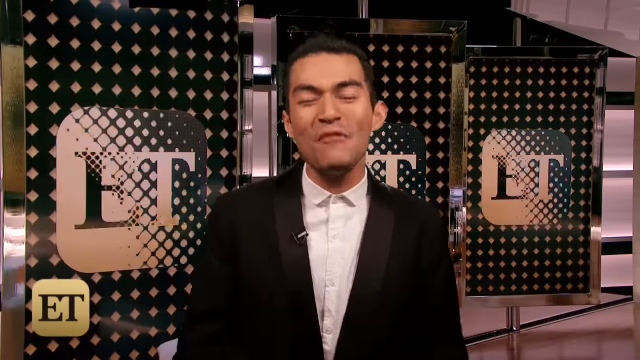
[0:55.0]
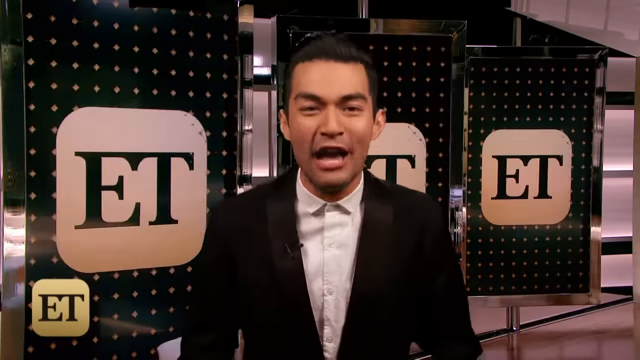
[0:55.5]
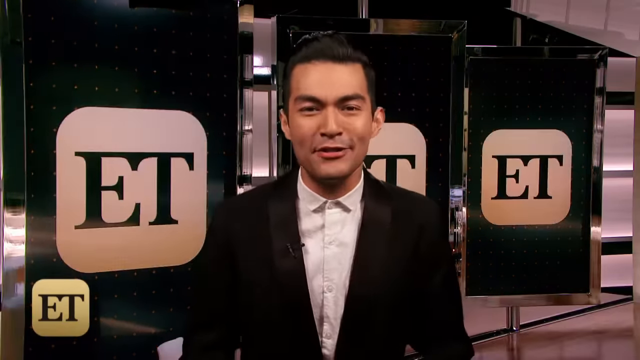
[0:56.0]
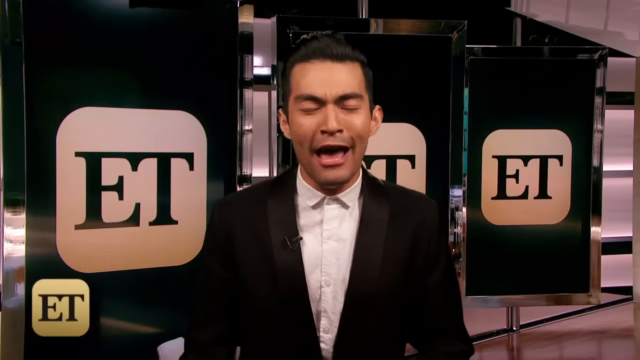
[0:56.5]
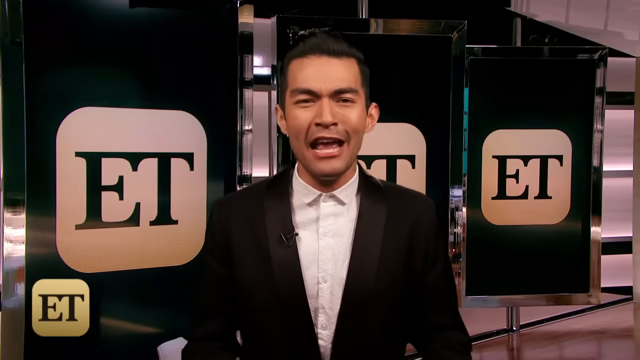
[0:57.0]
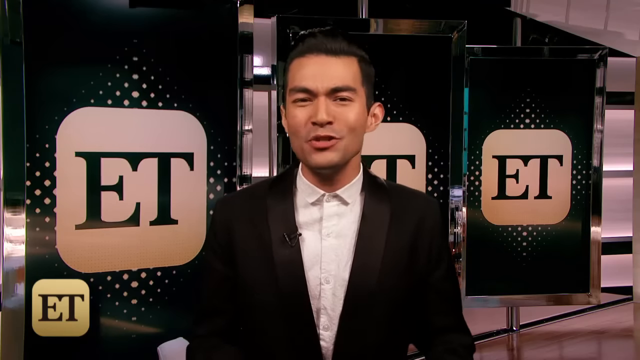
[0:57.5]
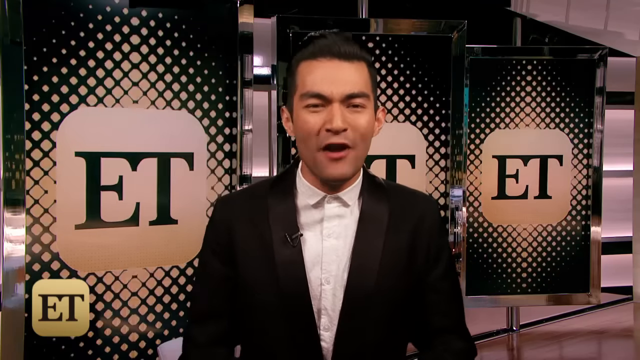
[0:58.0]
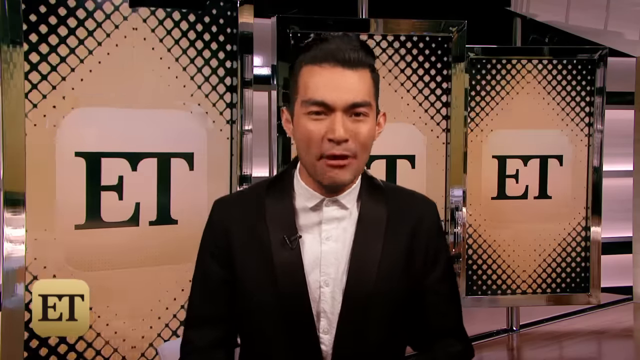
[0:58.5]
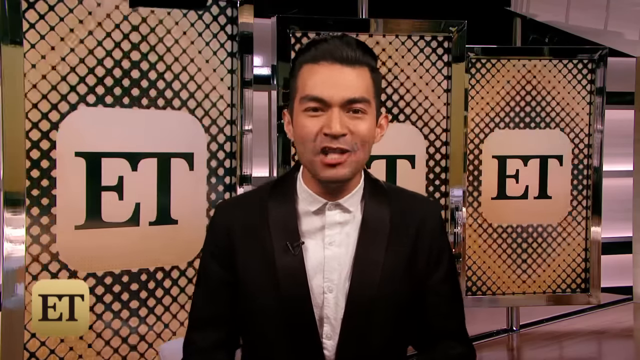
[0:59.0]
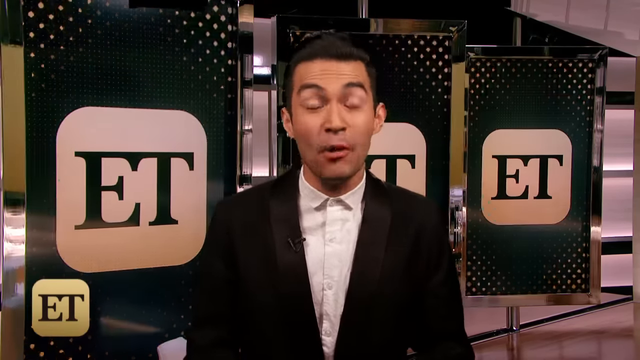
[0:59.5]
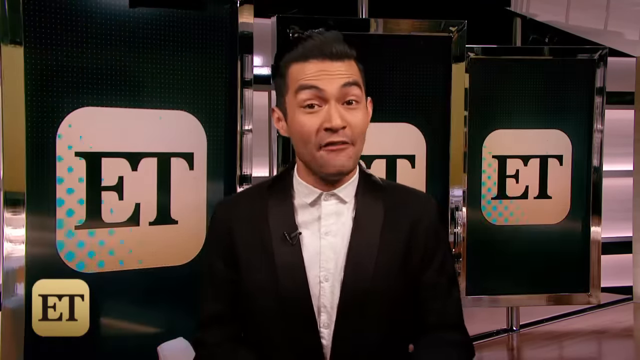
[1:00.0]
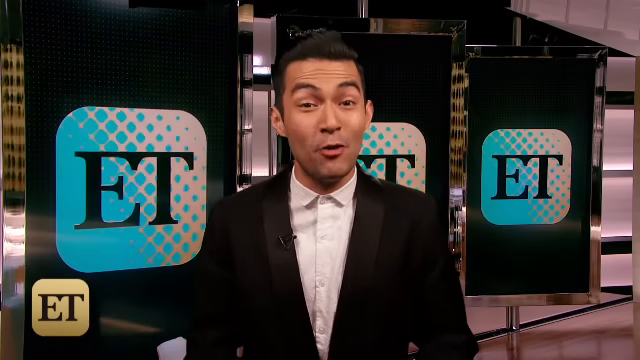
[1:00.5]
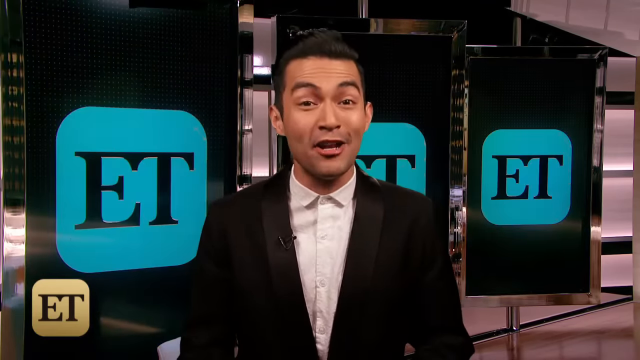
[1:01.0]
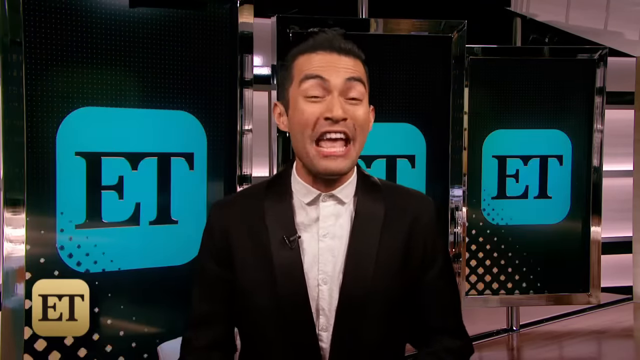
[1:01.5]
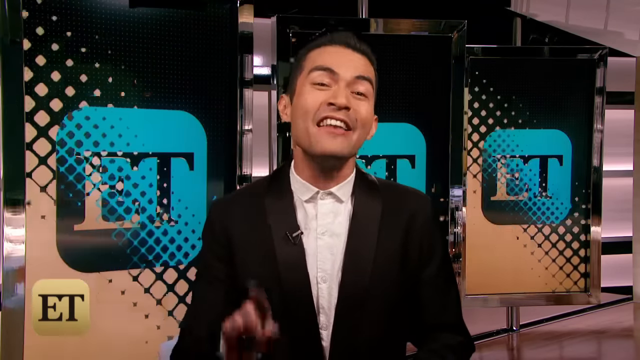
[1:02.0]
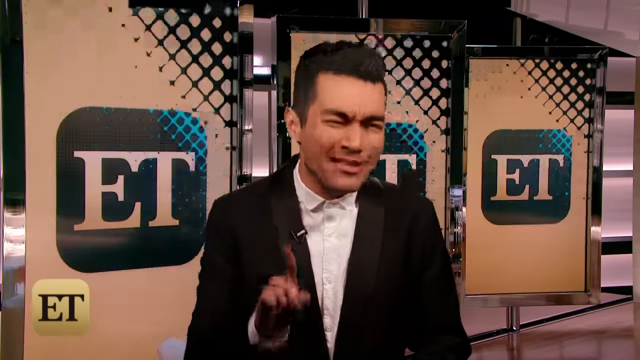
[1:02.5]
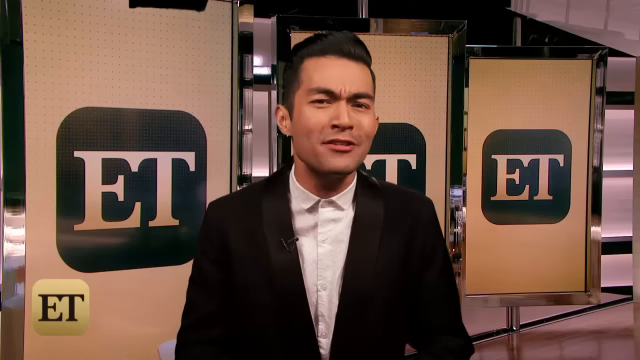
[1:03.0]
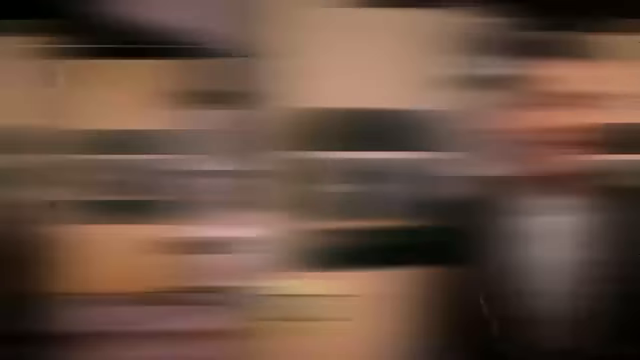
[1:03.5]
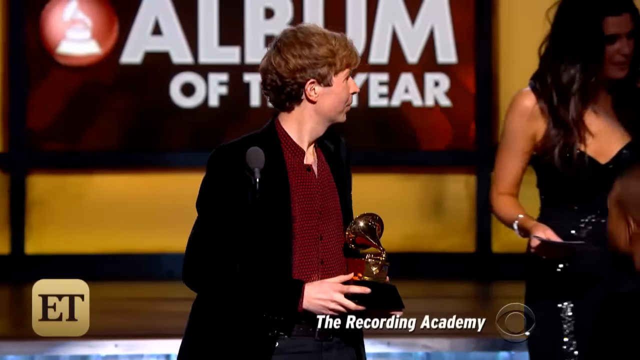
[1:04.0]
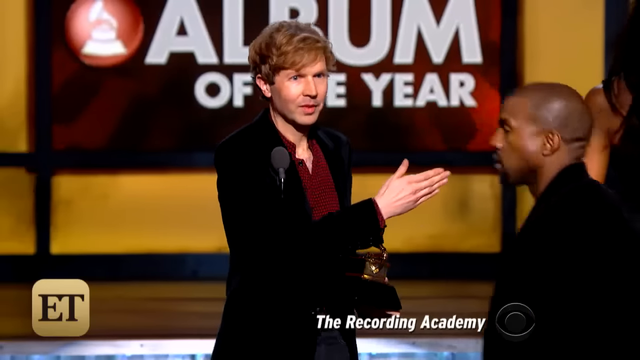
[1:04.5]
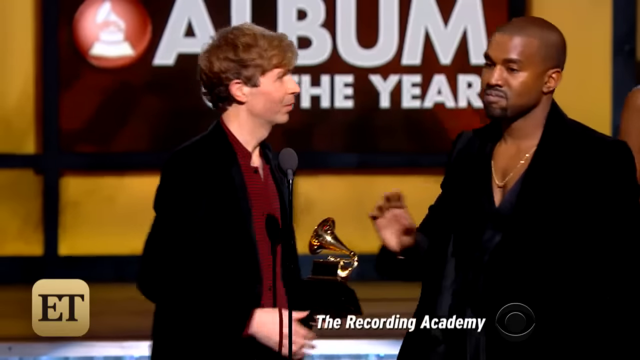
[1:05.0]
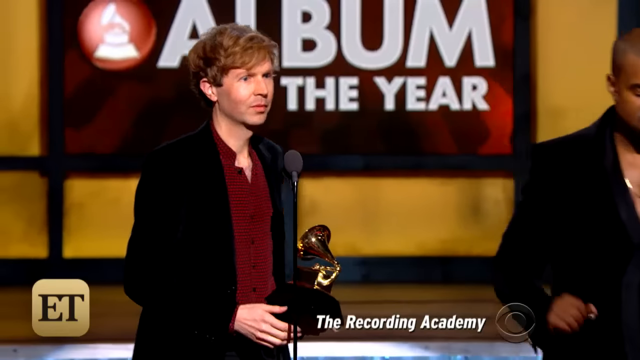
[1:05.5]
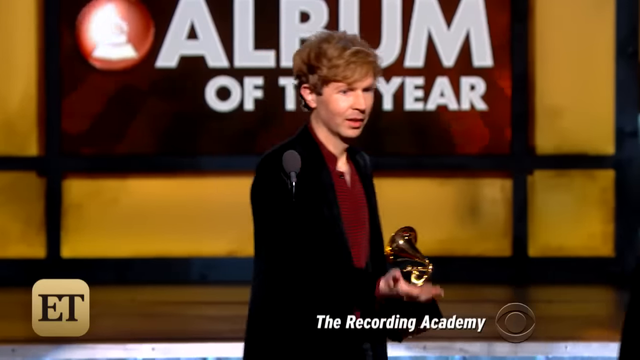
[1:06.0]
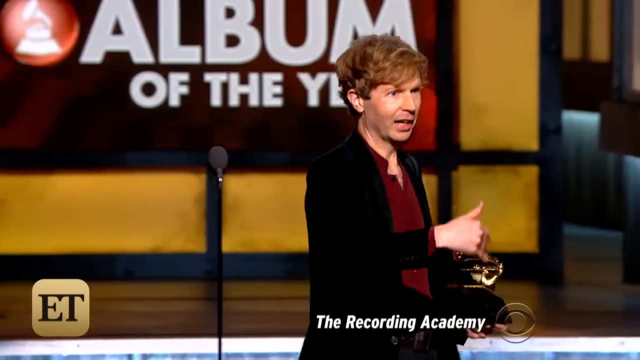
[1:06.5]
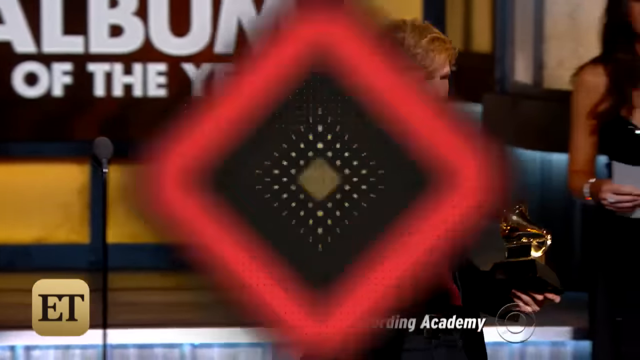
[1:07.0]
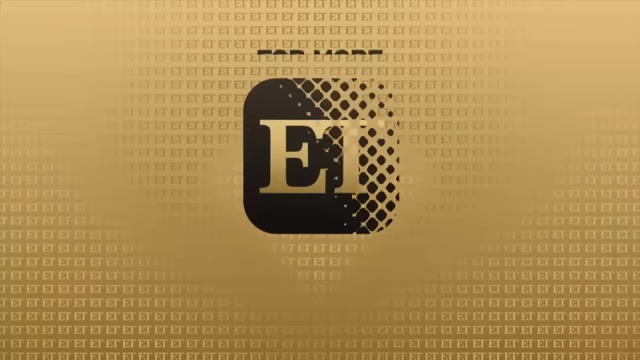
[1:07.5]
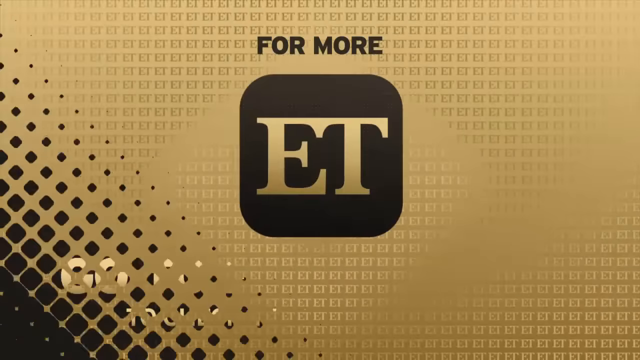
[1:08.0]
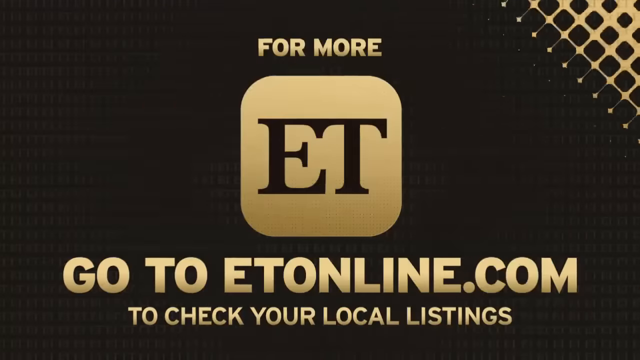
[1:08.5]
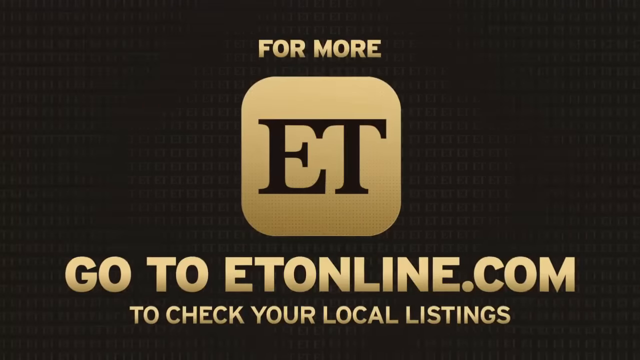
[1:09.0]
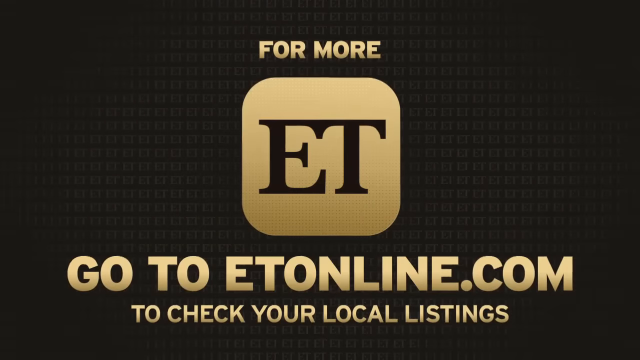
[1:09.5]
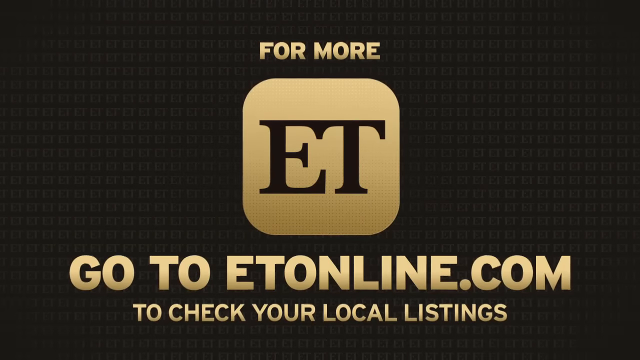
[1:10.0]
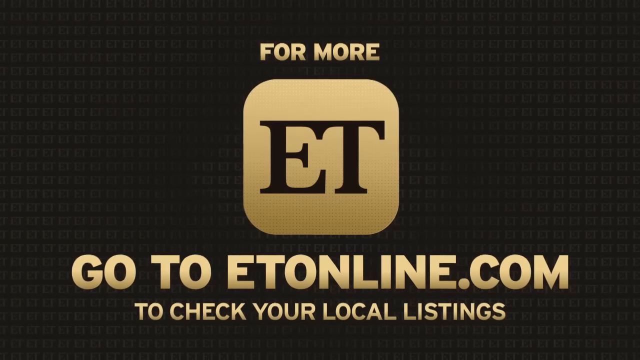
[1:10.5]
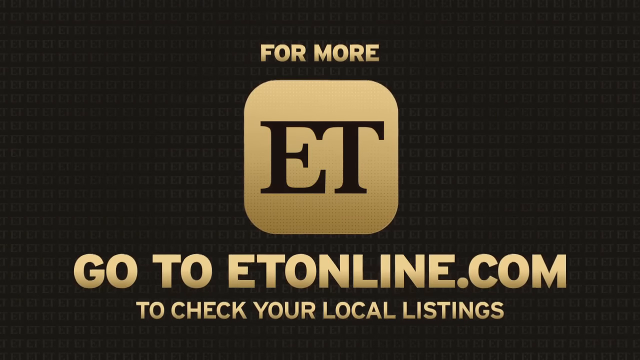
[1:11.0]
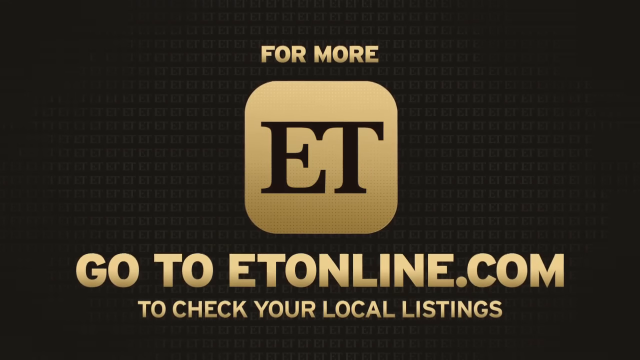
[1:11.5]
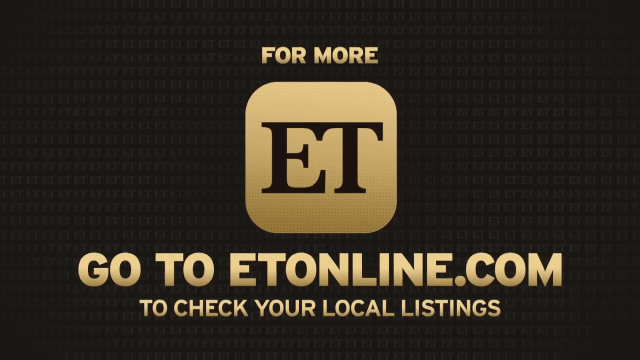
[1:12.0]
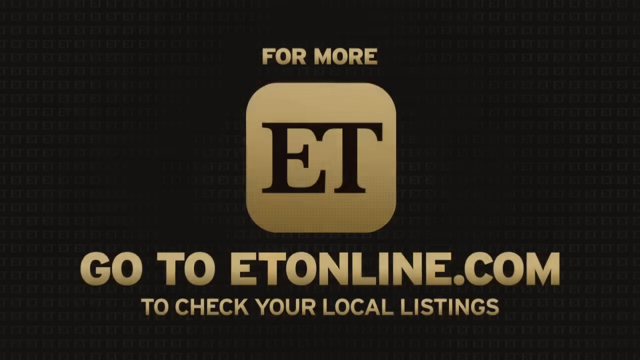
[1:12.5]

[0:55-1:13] An announcer is on the screen with ET in the background, saying something. Someone who has just won an award for Album of the Year is shown, and then the screen flips to etonline.com with listings. The ET announcer returns, talking with ET in the background, followed by someone who has just won an award on the screen, with Kanye coming up and then getting off the stage. The video goes to Joshua, then back to the ET announcer on the screen with ET in the background, then to someone who has just won Album of the Year, then back to Joshua with etonline.com, and finally back to the ET announcer on the screen.